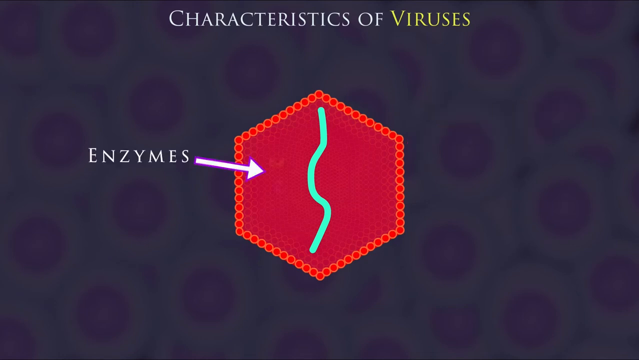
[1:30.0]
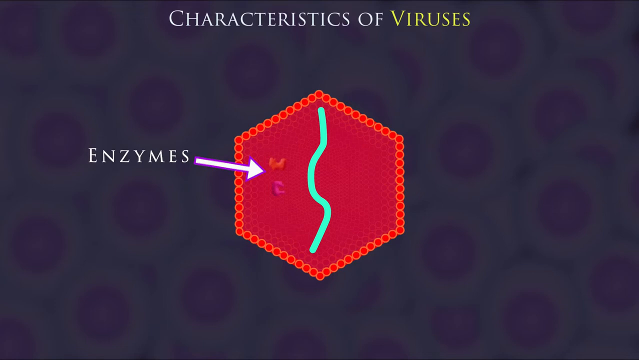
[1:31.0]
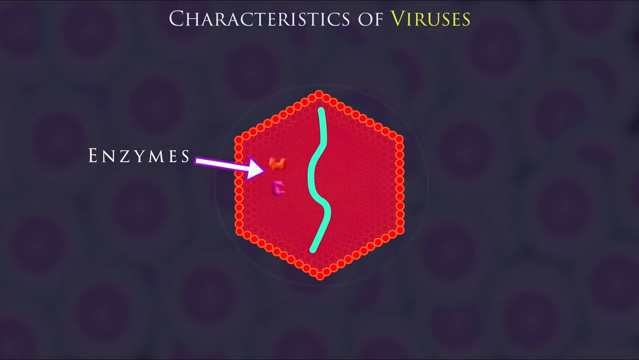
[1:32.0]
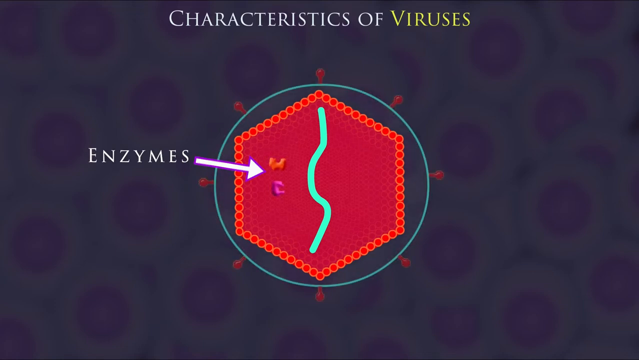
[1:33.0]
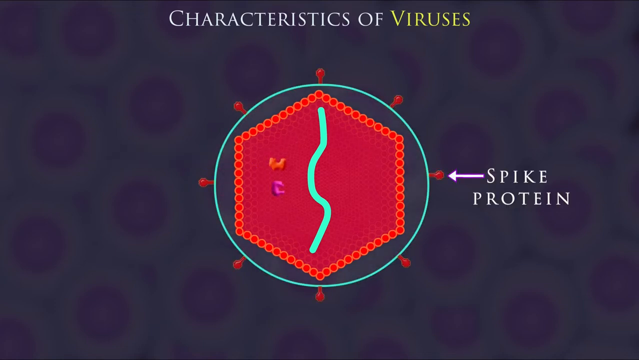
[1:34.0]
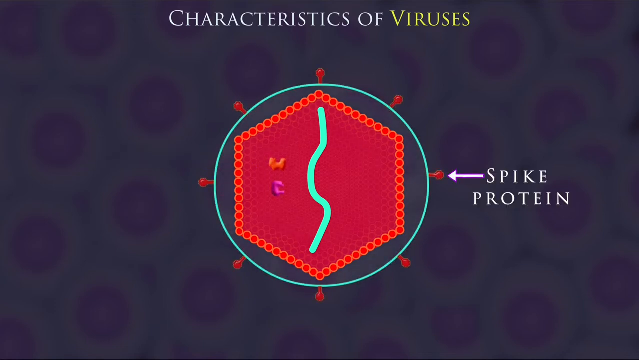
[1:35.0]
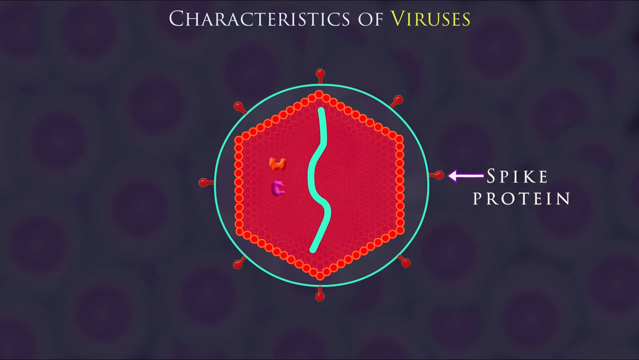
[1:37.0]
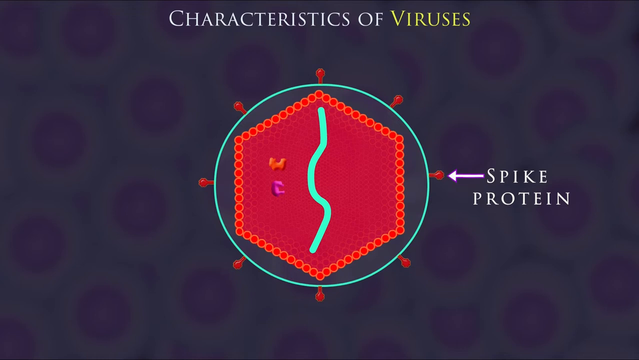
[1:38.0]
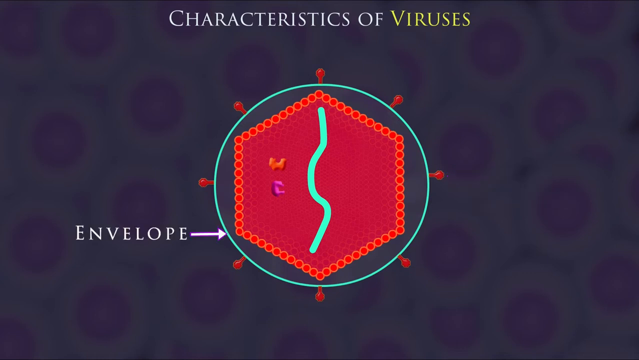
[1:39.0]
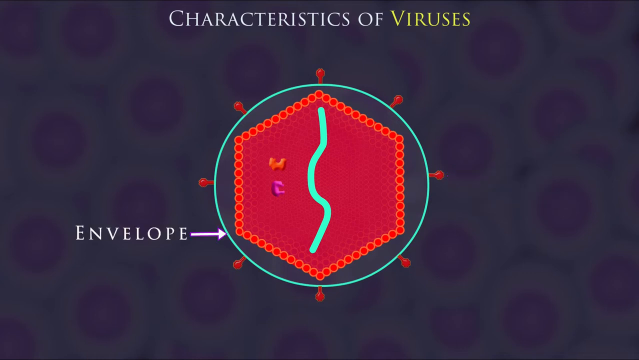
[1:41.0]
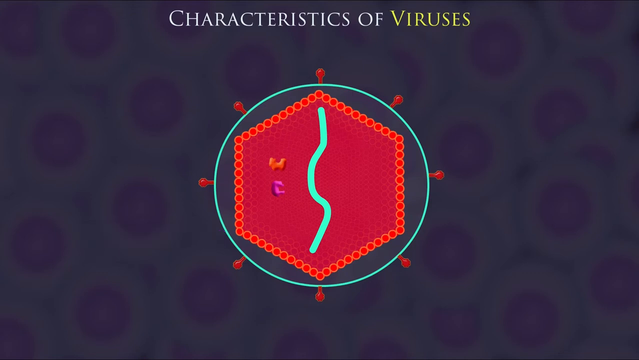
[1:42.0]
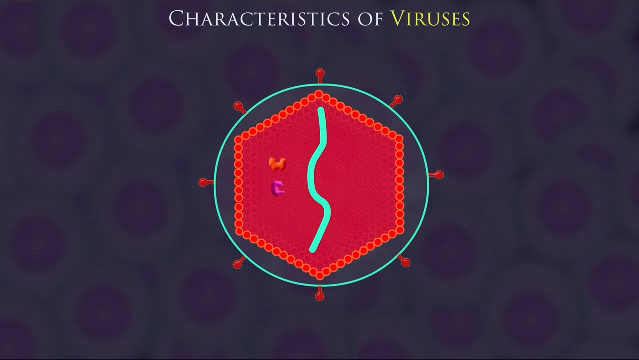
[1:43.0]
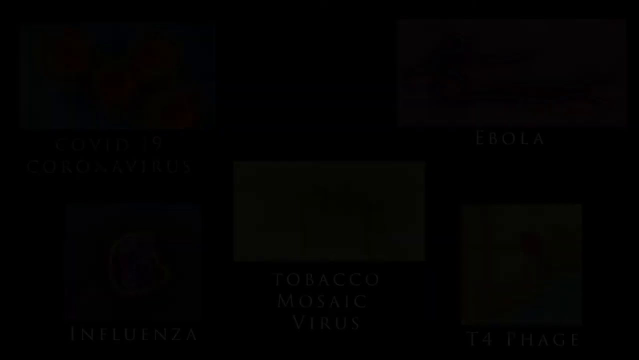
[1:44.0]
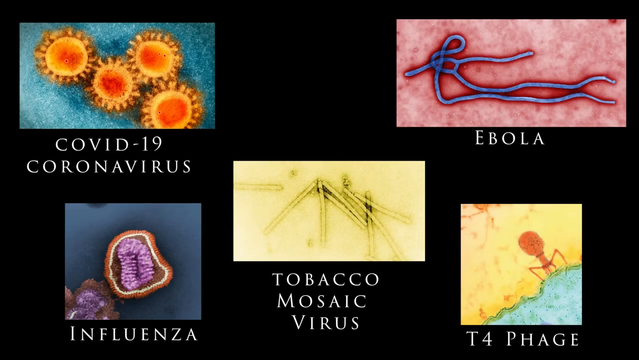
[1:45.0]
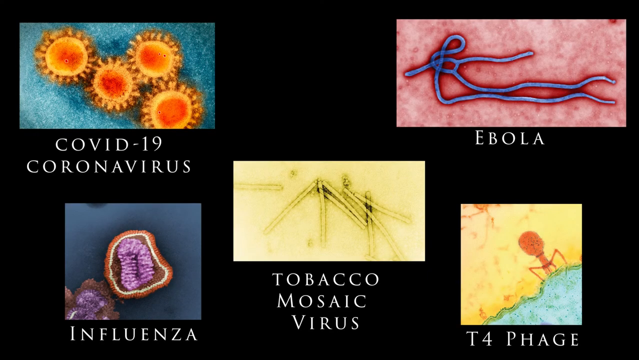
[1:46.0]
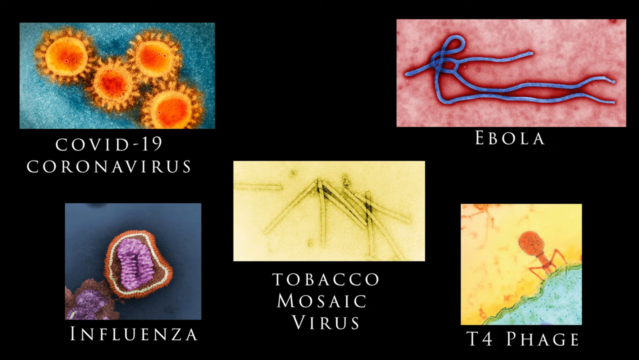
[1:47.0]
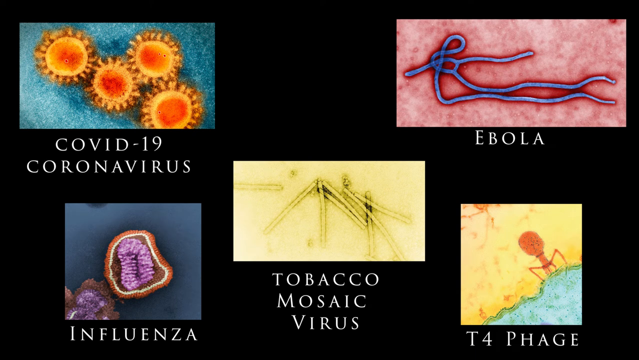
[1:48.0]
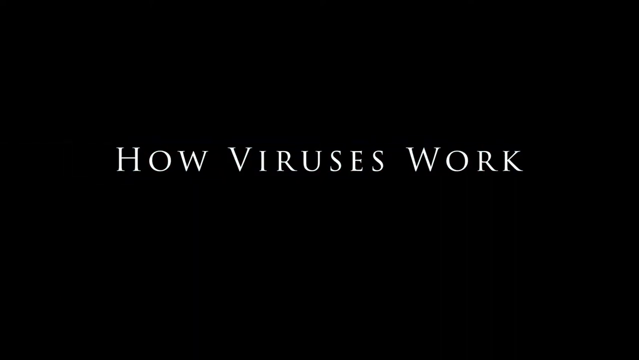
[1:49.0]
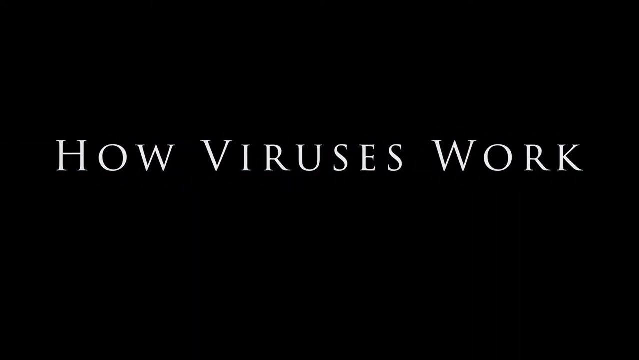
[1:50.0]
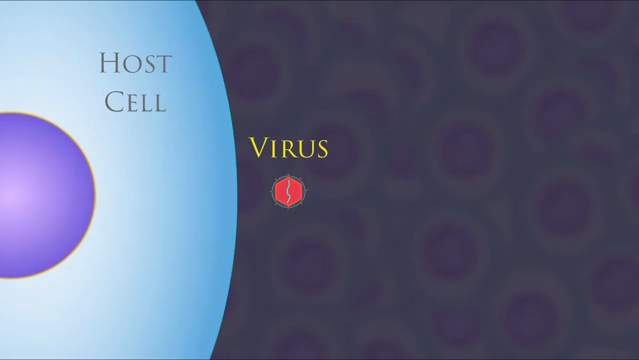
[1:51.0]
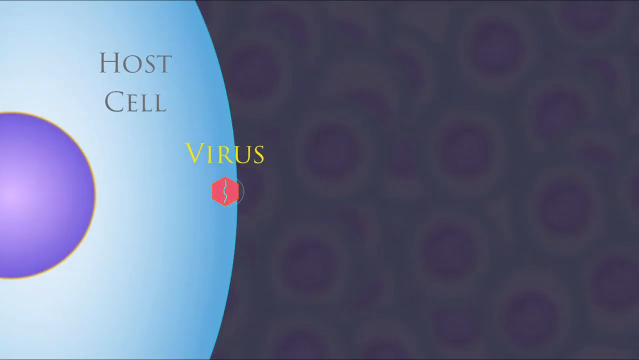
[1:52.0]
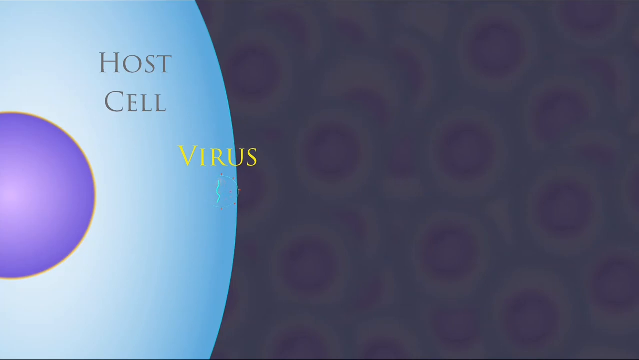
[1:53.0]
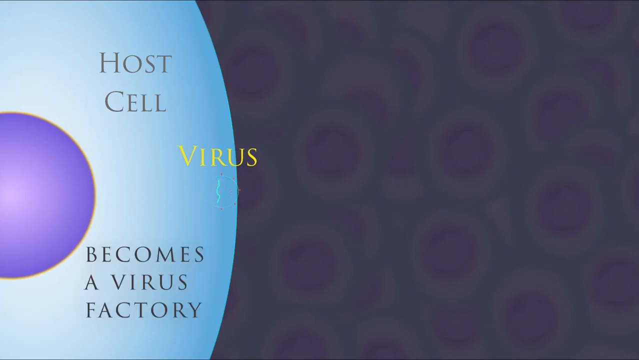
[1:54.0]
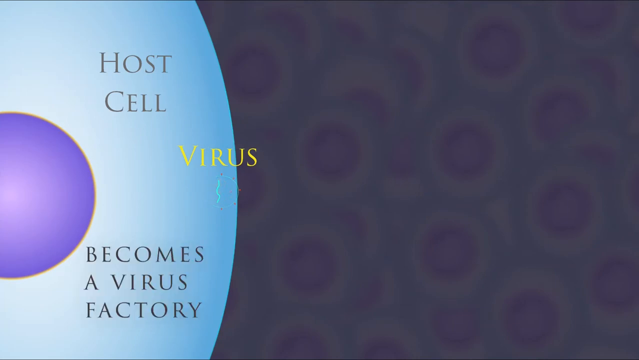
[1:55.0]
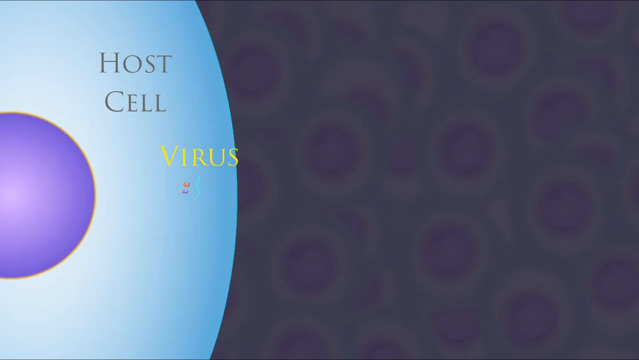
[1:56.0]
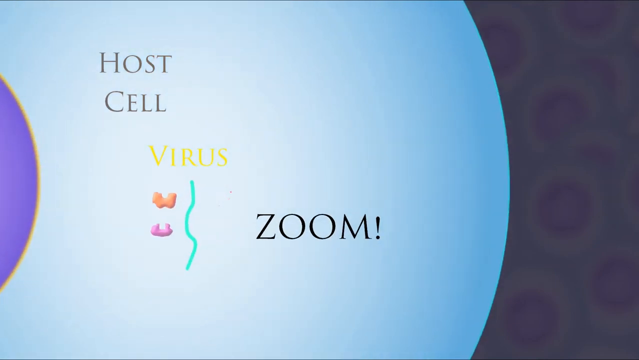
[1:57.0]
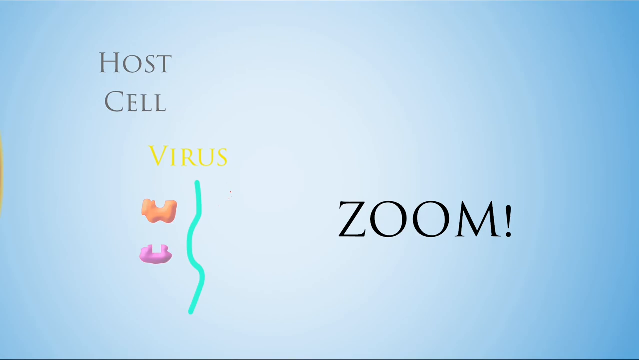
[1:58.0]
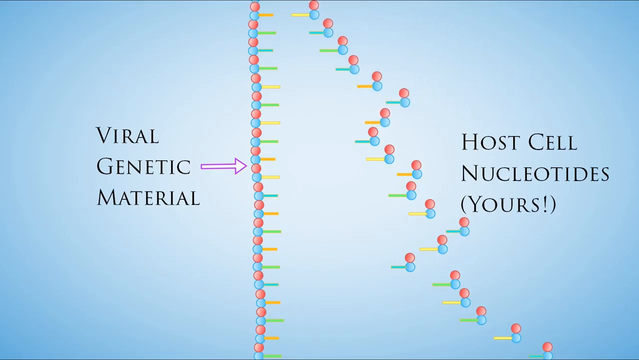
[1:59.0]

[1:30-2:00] Enzymes are shown around the virus, along with the capsid. A spike protein encapsulates the virus, with spikes coming off the envelope that coats the entire outside of the virus. The next screen shows different viruses as they look under a microscope: the COVID-19 coronavirus, Ebola virus, influenza, T4 phage, and the tobacco mosaic virus. The following screen says "how viruses work." A virus then attaches itself to the host cell, which becomes a virus factory, and more viruses attach to the host cell.